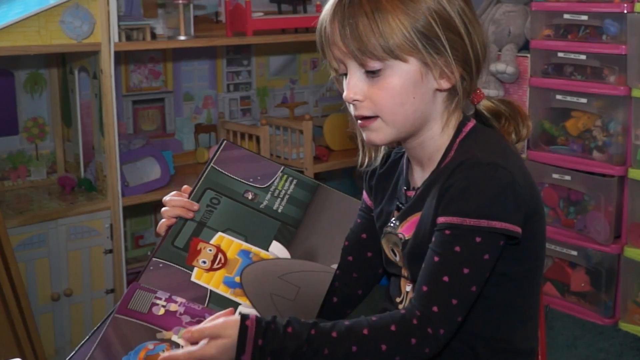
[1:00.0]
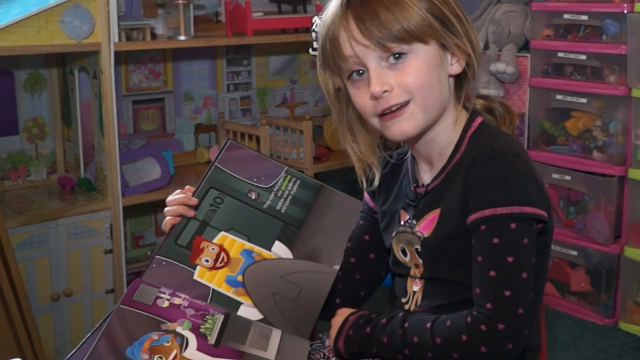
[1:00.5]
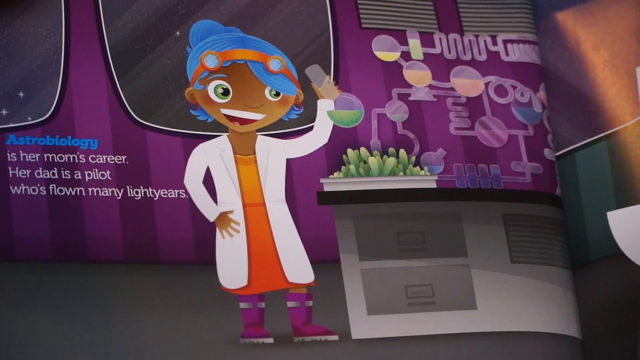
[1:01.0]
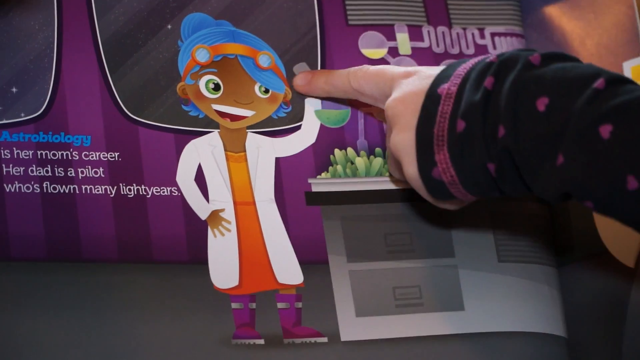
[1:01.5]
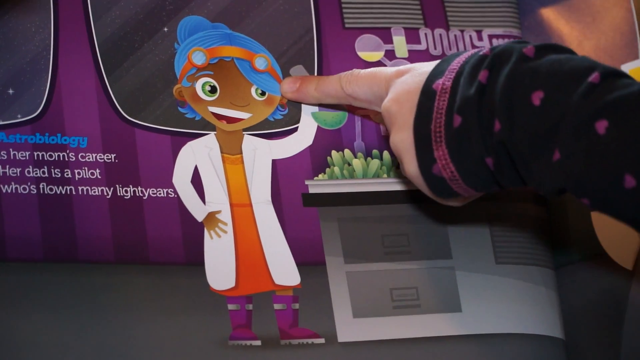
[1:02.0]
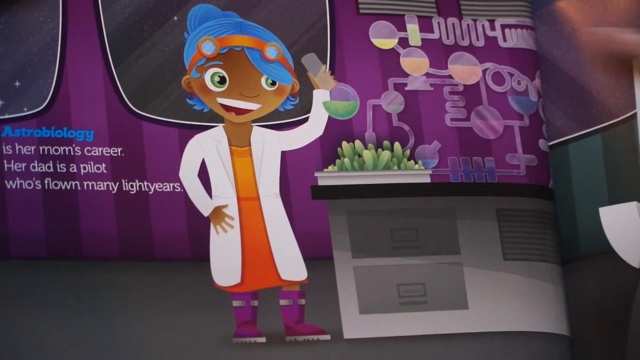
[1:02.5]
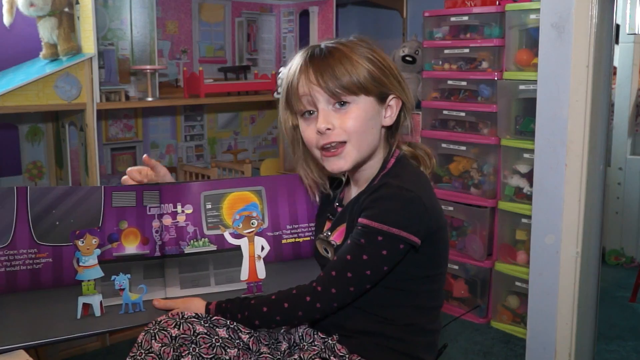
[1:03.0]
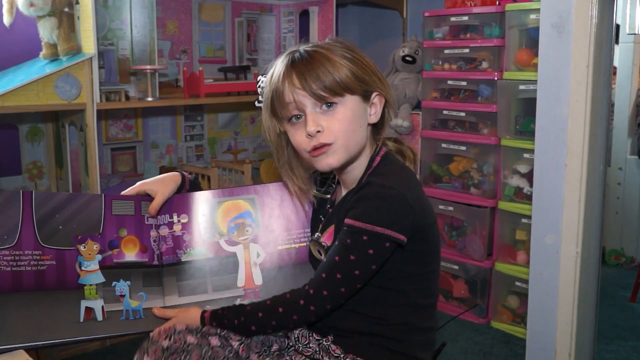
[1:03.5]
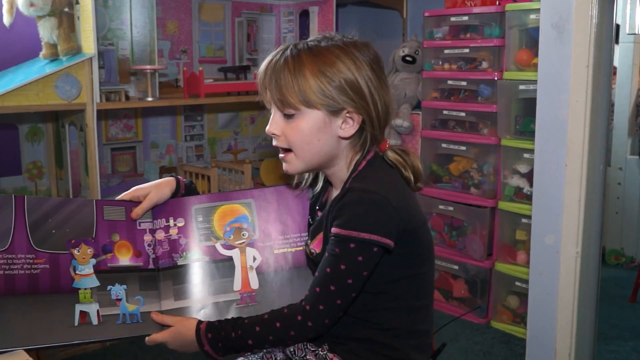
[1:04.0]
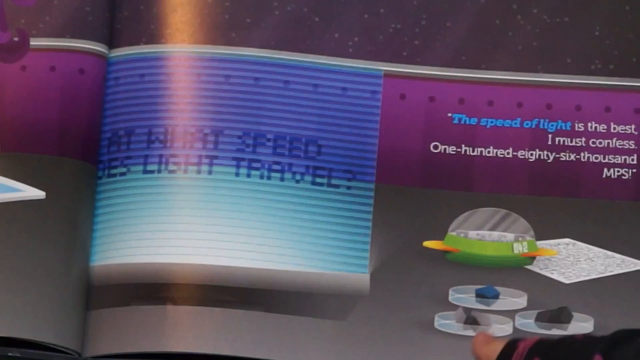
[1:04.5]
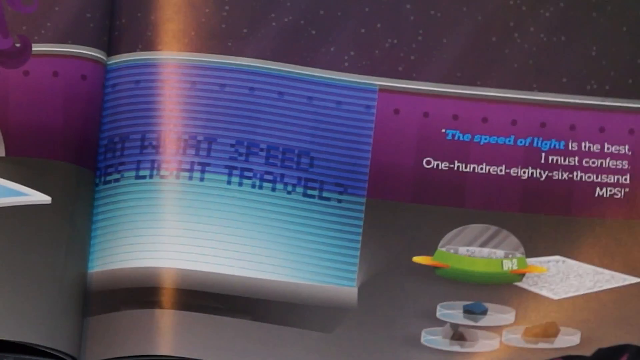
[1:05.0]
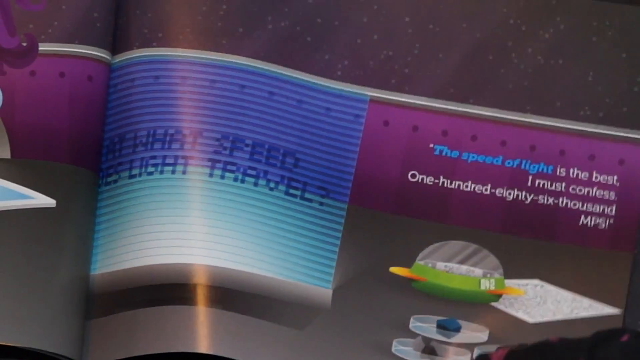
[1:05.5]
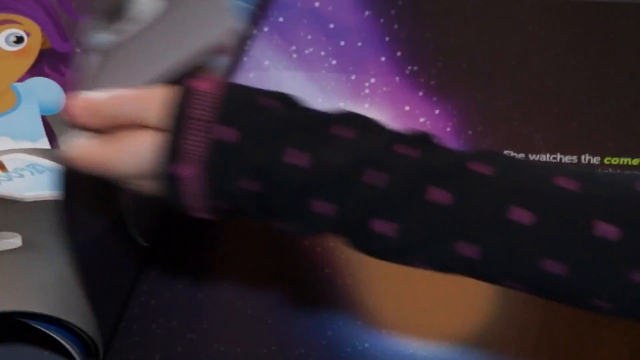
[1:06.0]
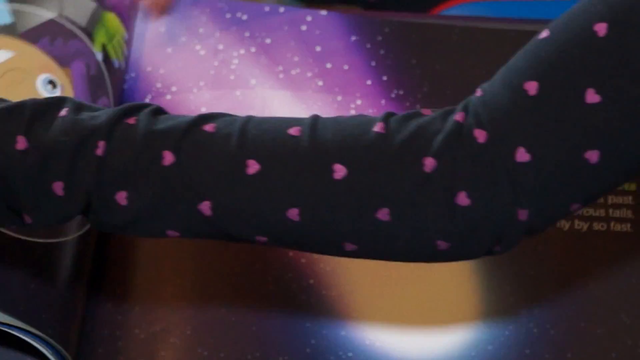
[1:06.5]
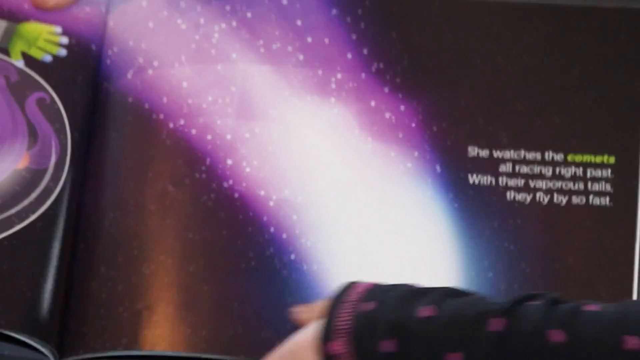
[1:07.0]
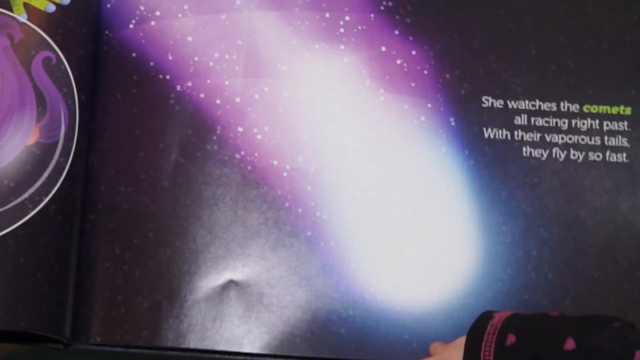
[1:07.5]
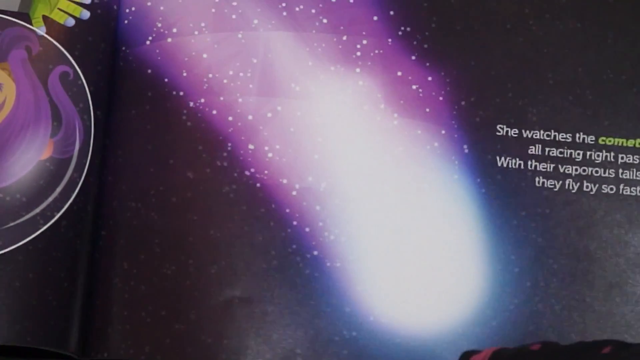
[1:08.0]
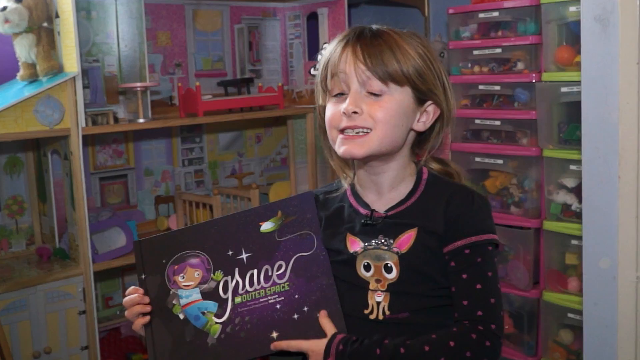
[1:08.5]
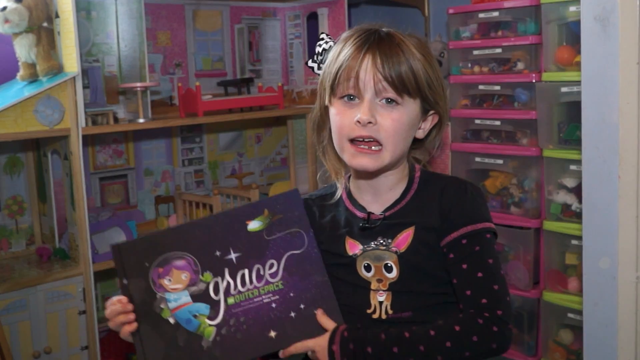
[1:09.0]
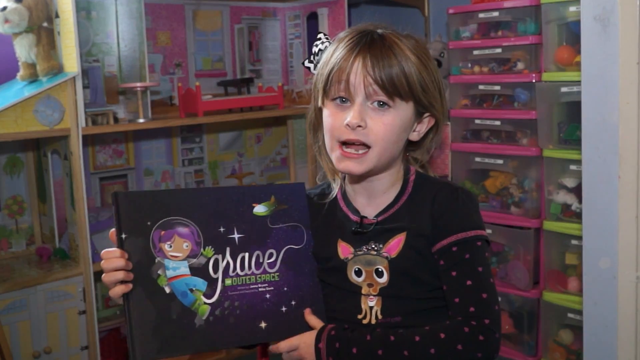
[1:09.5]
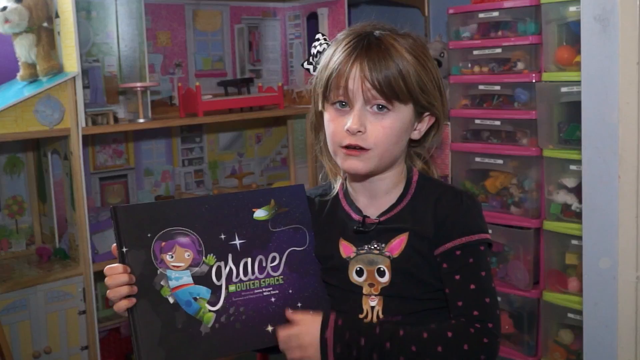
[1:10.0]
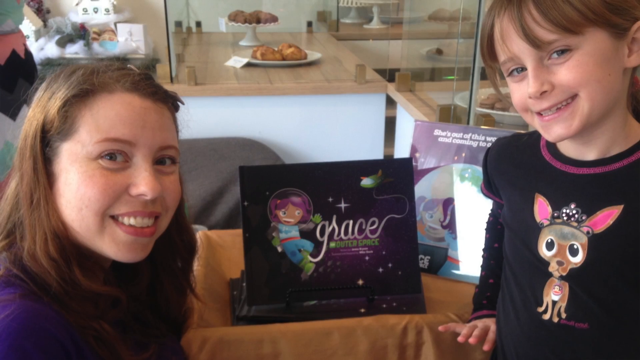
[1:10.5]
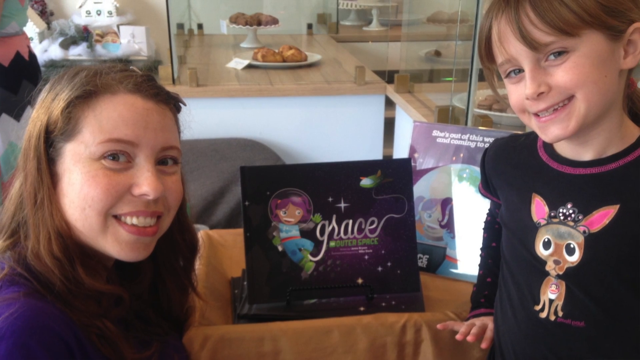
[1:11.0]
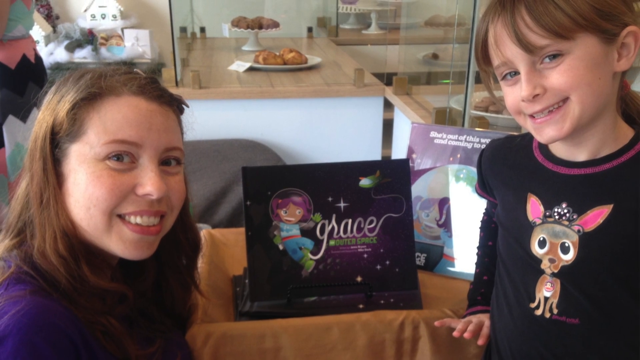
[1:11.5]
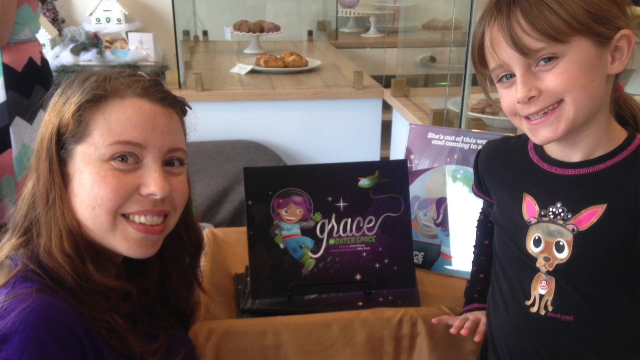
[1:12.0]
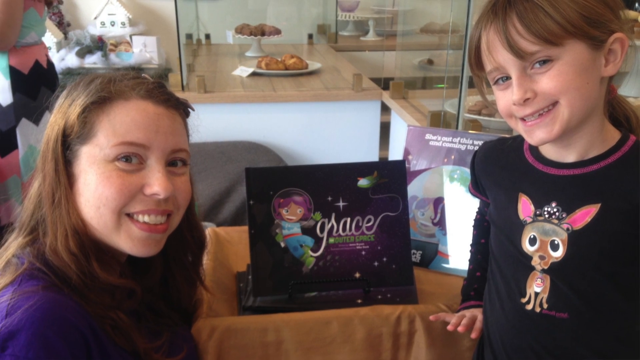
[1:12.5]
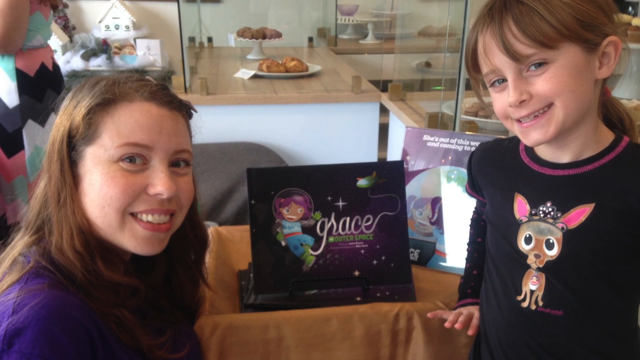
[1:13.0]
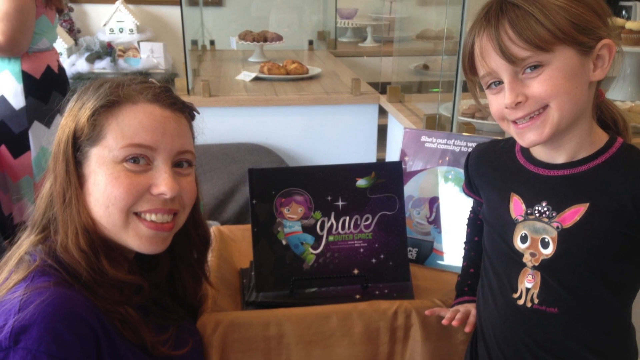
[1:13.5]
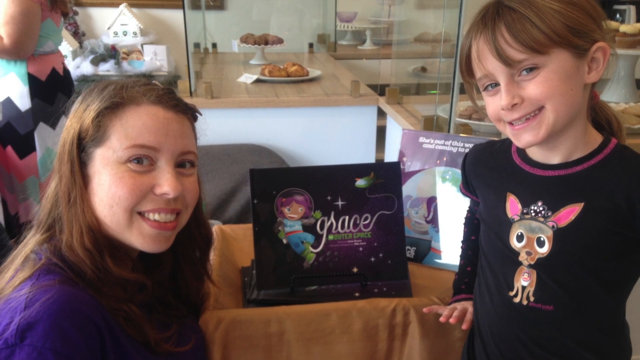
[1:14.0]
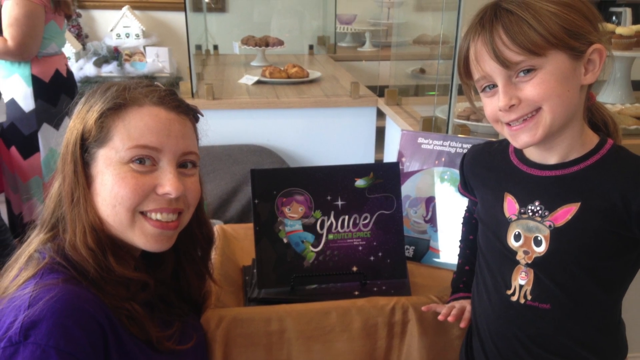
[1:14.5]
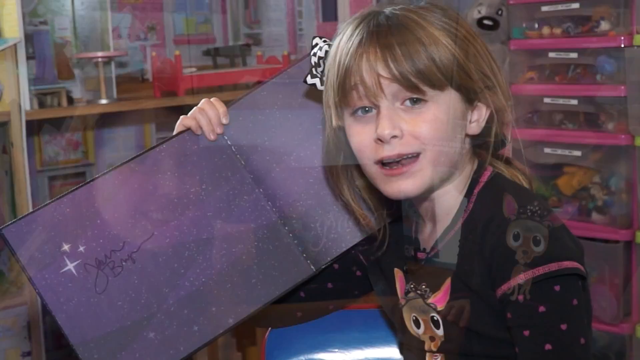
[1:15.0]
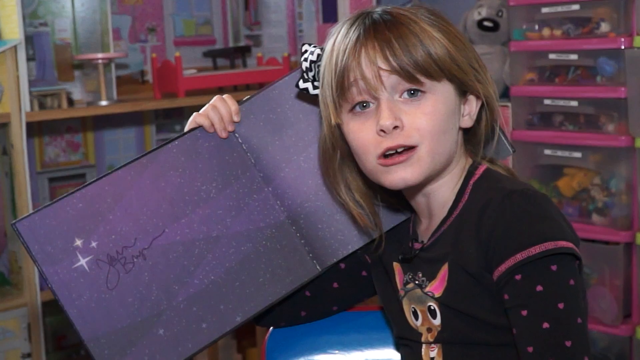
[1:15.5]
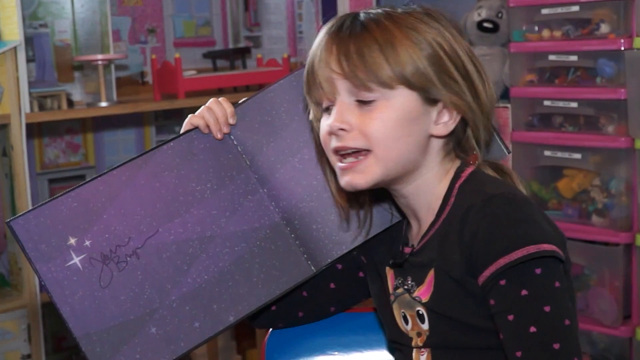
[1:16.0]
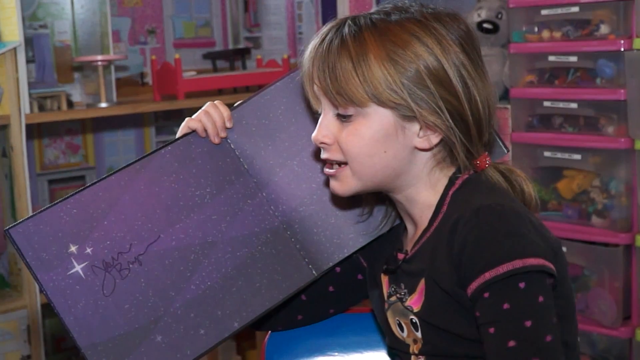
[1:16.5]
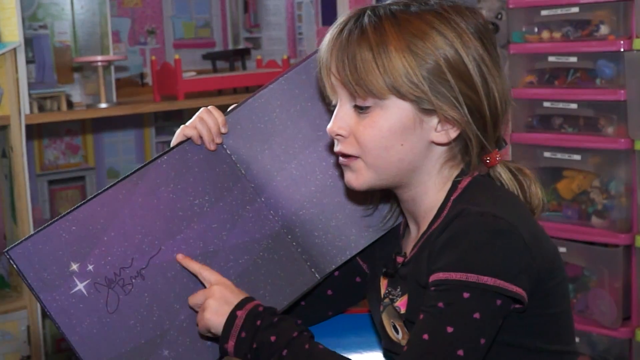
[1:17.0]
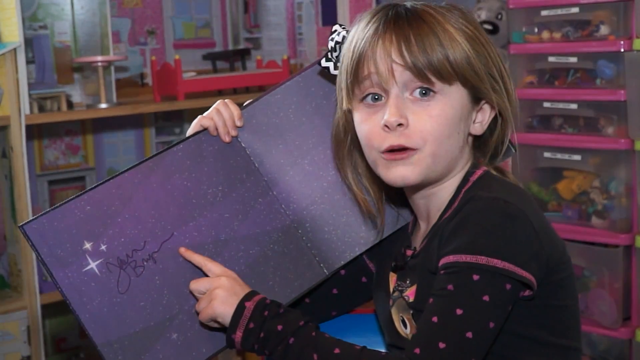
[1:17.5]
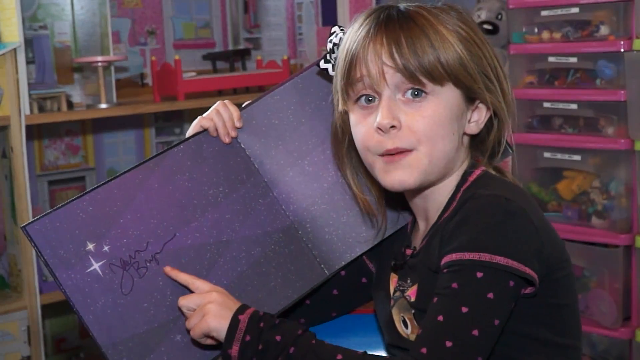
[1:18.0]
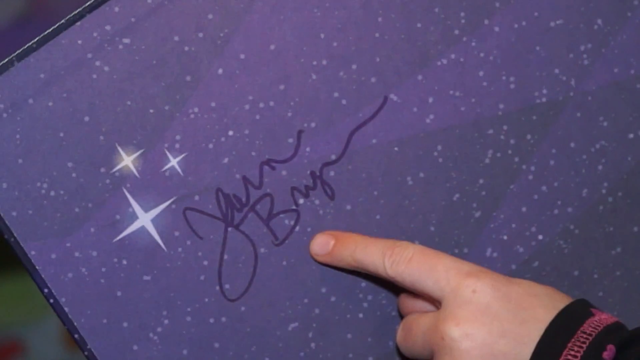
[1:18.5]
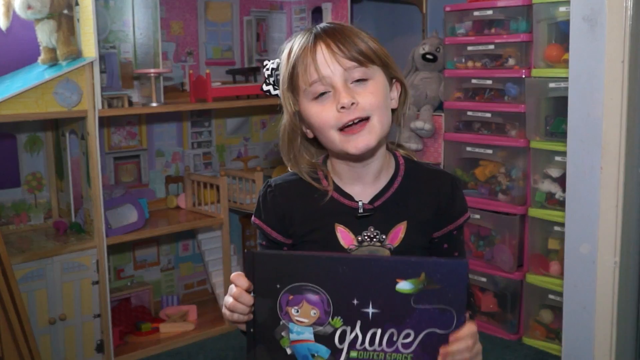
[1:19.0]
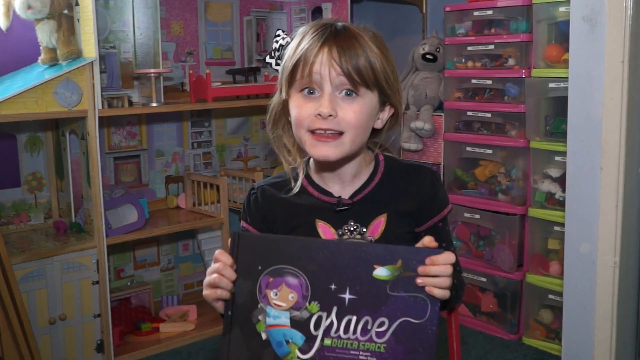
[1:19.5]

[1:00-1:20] The young girl points to a picture in the book Grace of the astrobiologist with blue hair holding a glass bottle of green liquid; she is the purple-haired astronaut's mum. The book also says that her dad is the pilot who has flown for many light years. The girl points to the mum's blue hair. Another section of the book is about the speed of light, which is 186,000 MPS. She turns the page to a comet with its tail. She closes the book and holds it up to the camera again. A photograph then shows her with a young woman in a store with a display of the Grace books; the woman is possibly the author of the book. They apparently met at a cafe or signing. The young girl opens the book to the inside front cover, where there is the author's signature, and points to it. She then sits back on her chair and holds the book, showing the cover to the camera.